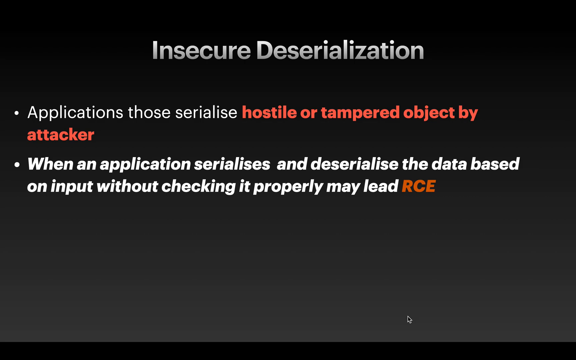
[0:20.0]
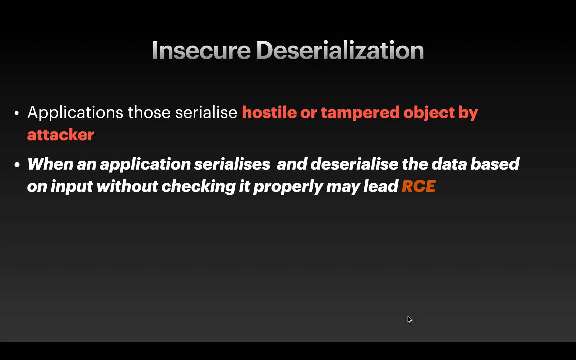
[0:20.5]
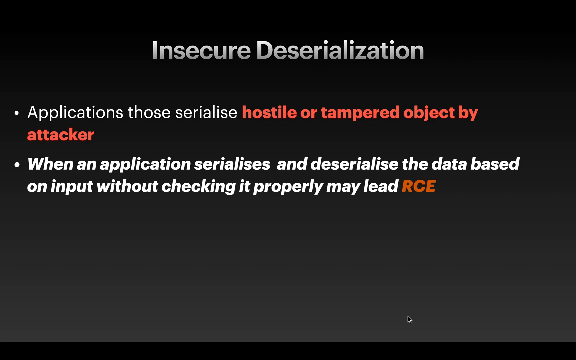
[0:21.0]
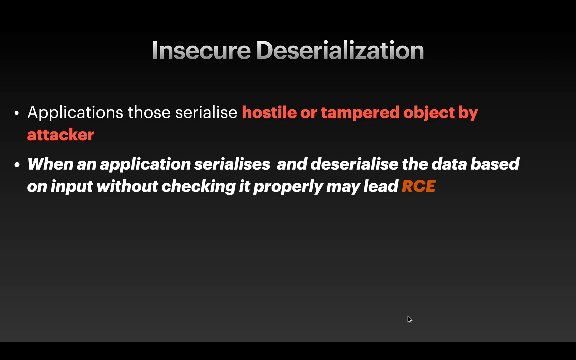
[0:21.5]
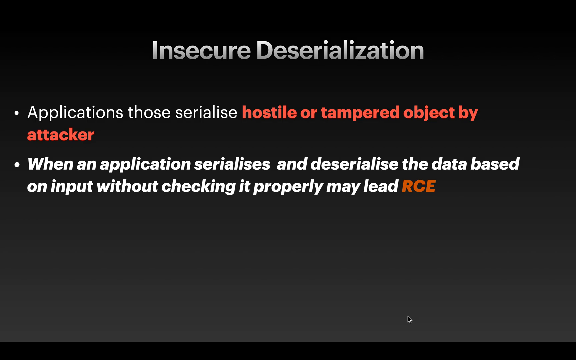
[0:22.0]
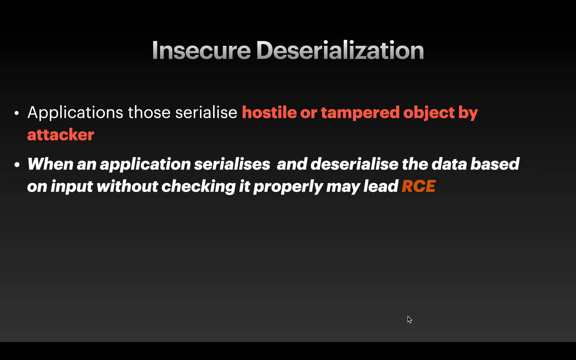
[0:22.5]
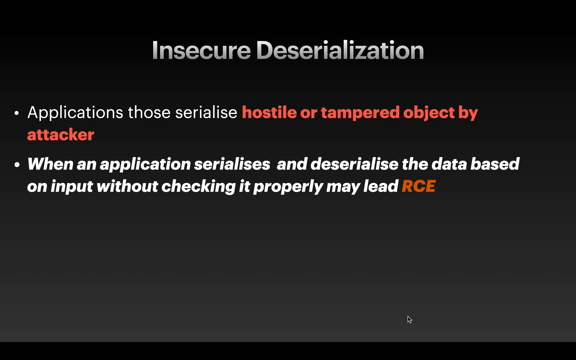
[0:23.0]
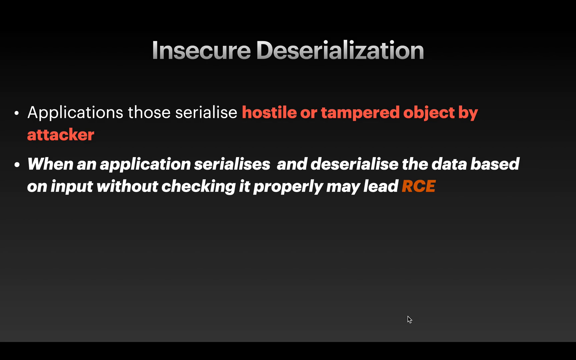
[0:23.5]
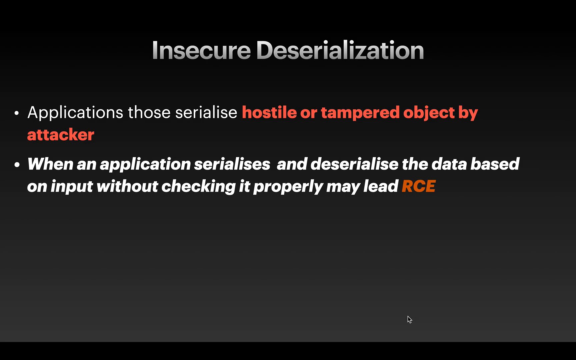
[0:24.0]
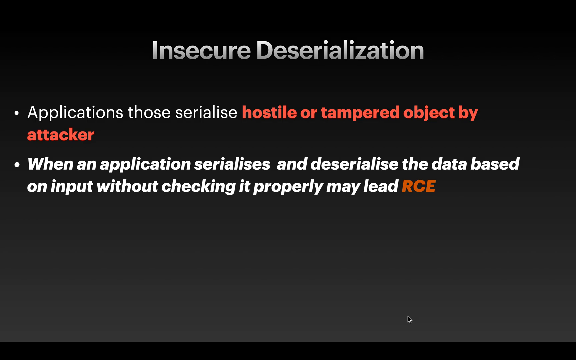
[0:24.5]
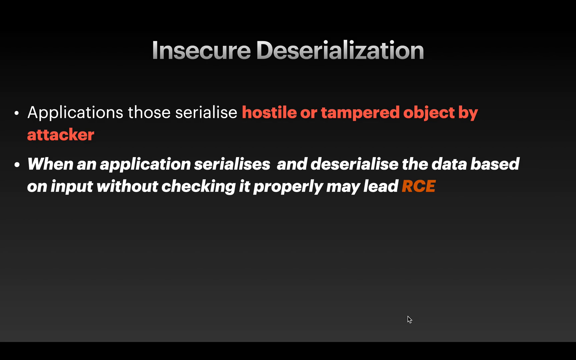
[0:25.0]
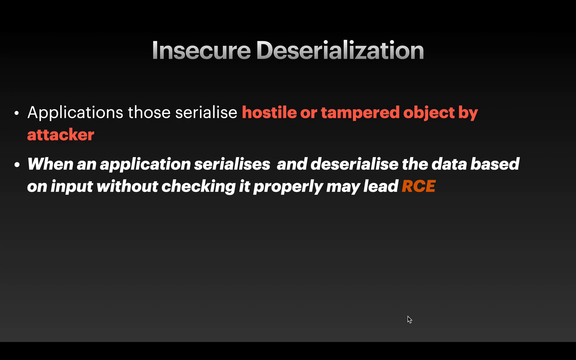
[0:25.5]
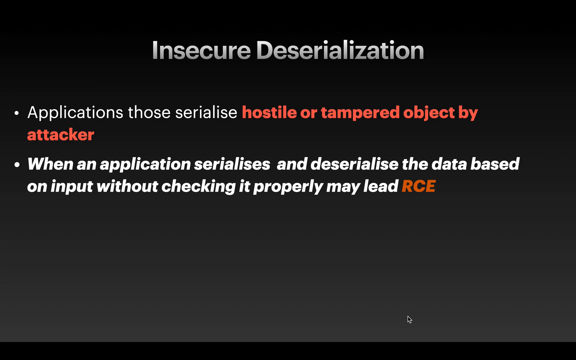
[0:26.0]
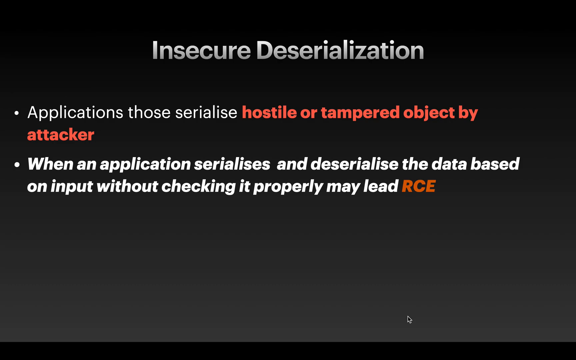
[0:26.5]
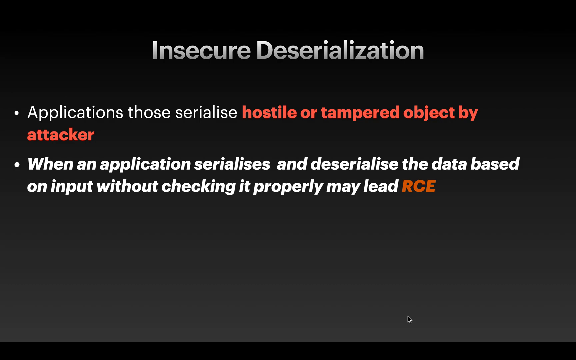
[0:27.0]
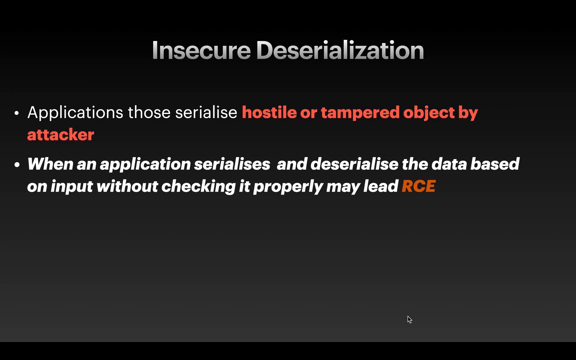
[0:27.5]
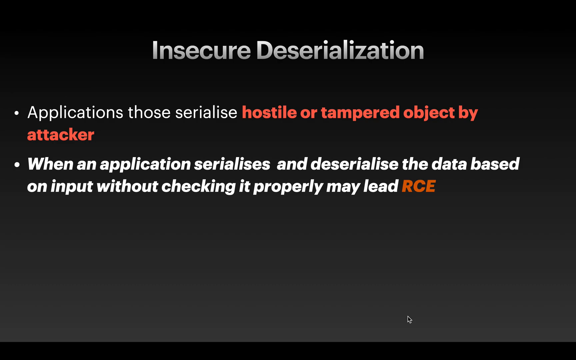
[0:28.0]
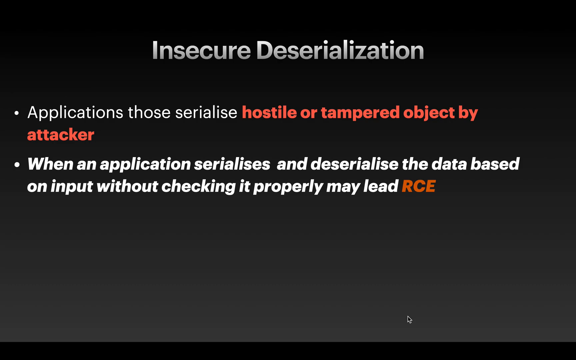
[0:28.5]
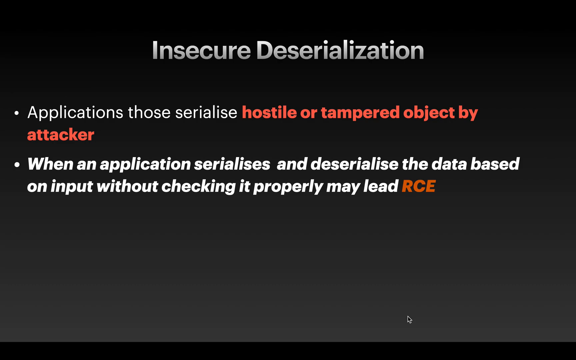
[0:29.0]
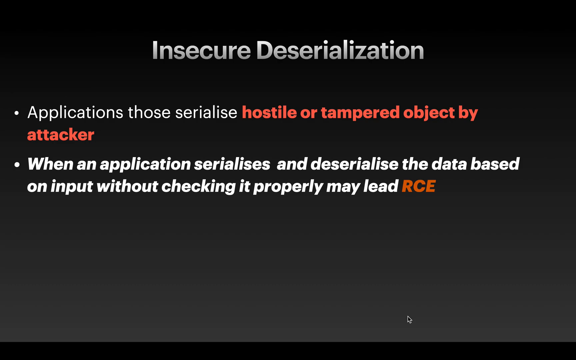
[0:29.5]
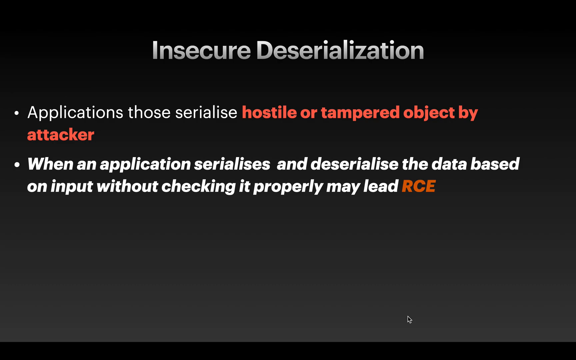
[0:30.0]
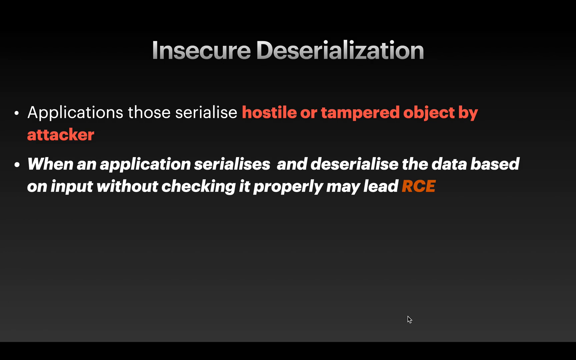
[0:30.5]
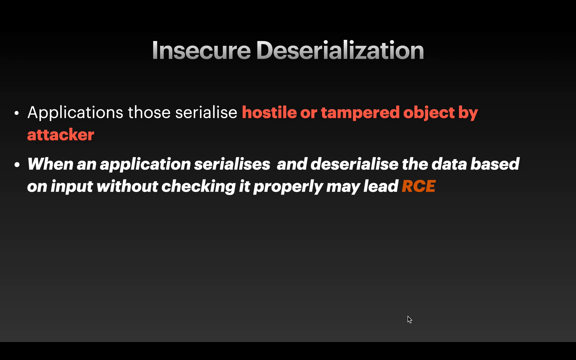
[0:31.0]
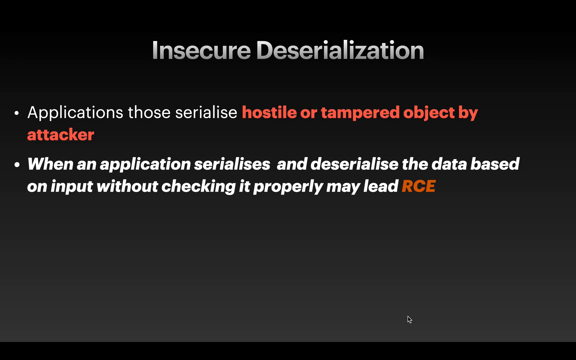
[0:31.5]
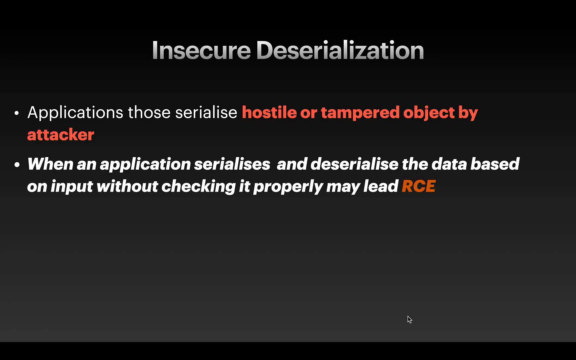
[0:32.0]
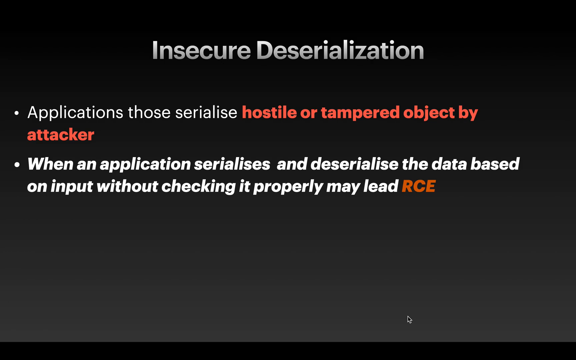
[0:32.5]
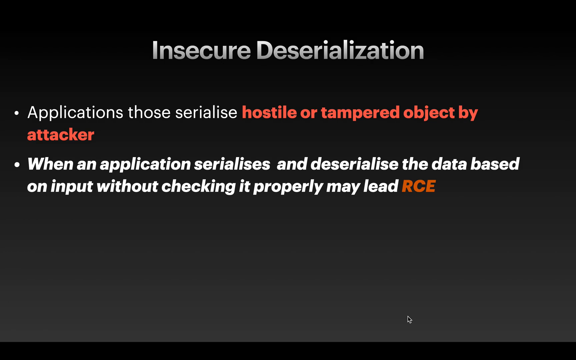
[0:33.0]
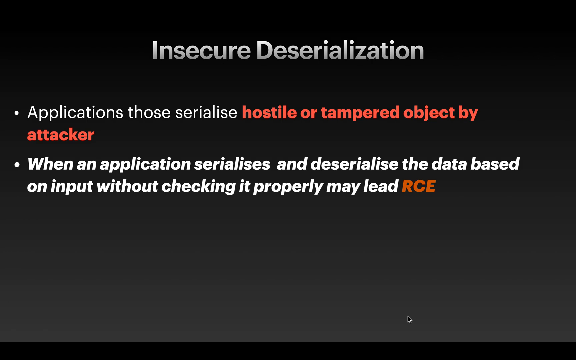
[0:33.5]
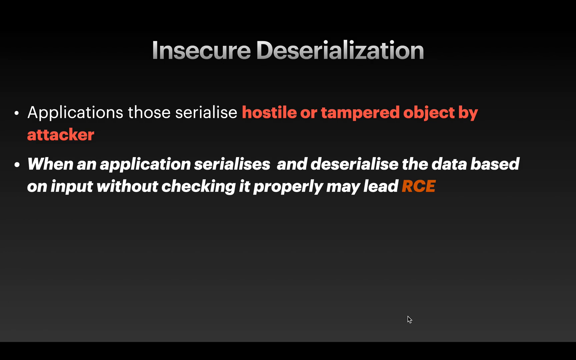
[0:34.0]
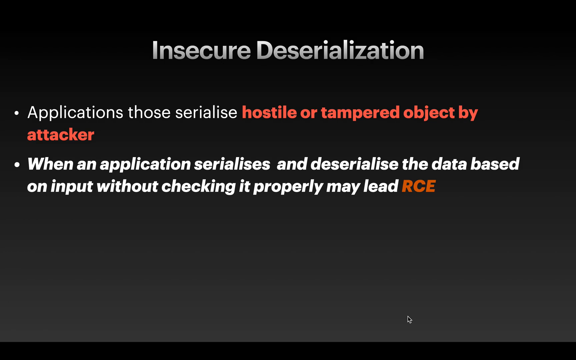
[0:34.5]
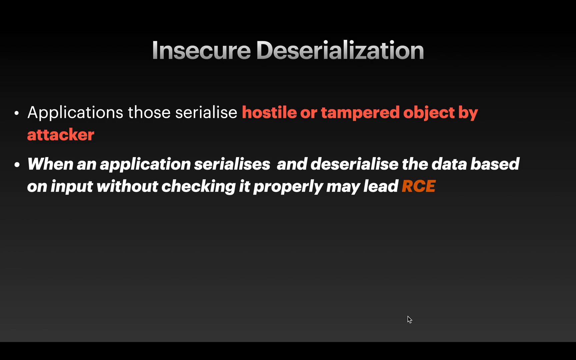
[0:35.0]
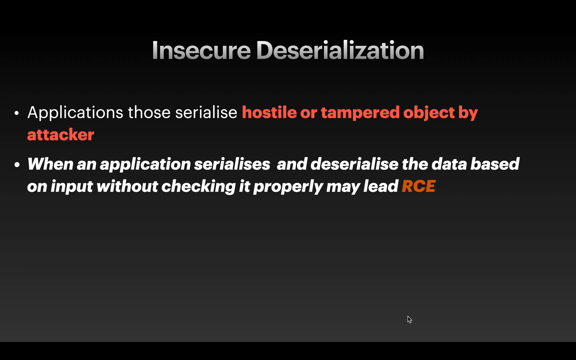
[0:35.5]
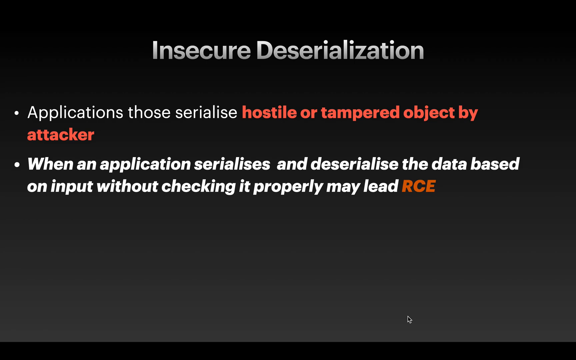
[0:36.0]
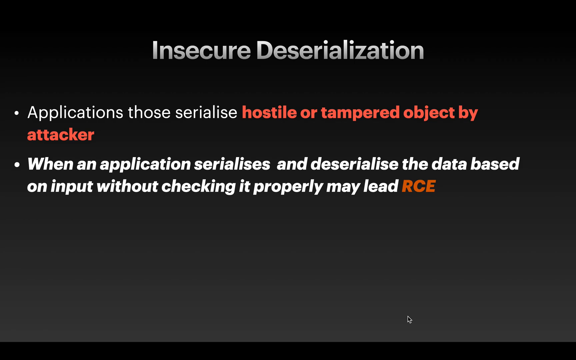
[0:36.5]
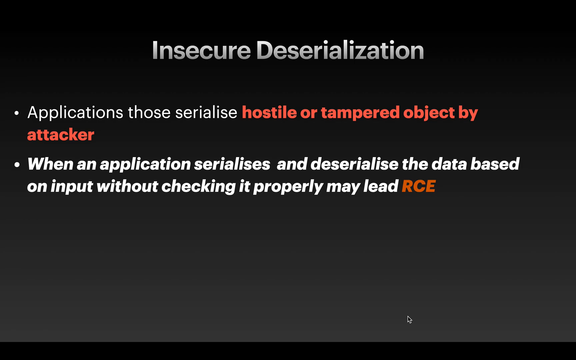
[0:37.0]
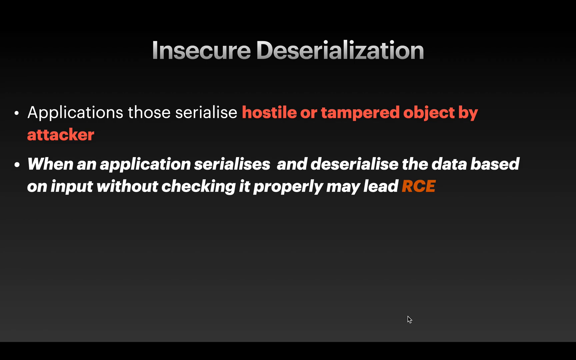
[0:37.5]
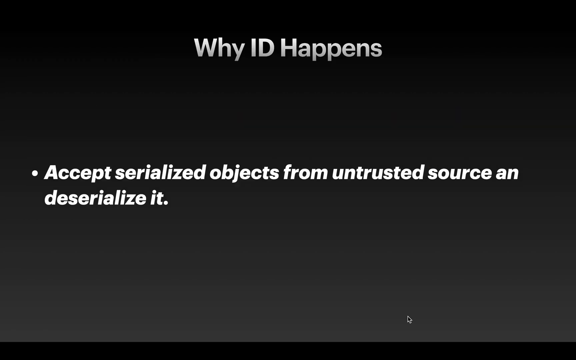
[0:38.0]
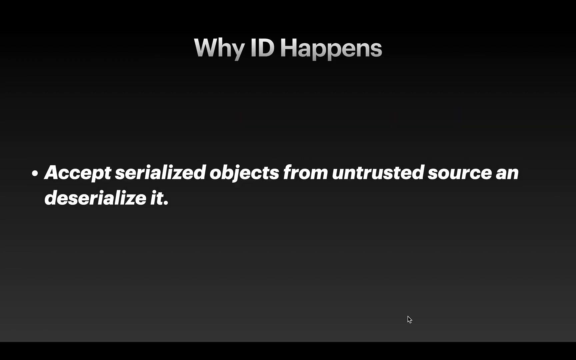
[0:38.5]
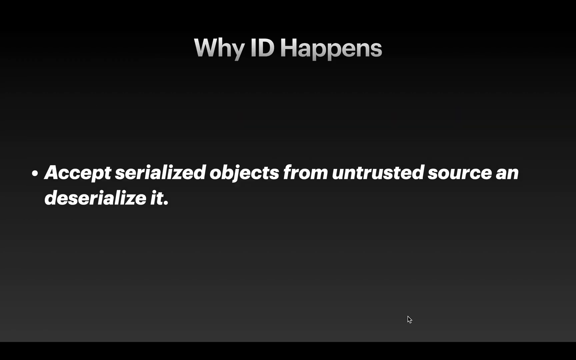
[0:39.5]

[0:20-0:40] The insecure deserialization slide remains on screen. It looks like a presentation on the possible negative effects of bugs and where they come from; the slide says they come from objects that have been tampered with or used by the attacker. It states that when this happens the database is vulnerable, and if it is not checked properly it may lead to RCE, which seems to be a situation to avoid. The screen then changes to another slide that says "why ID happens," all in white letters, stating that it happens because serialized objects from a trusted source are accepted and deserialized.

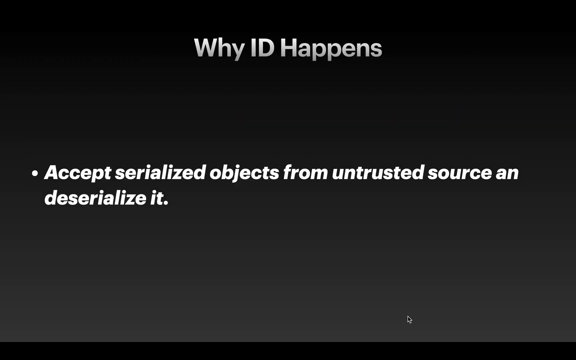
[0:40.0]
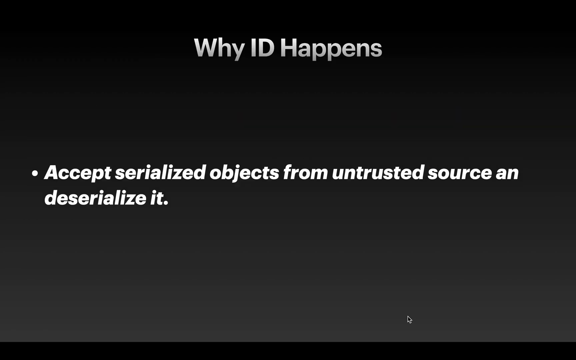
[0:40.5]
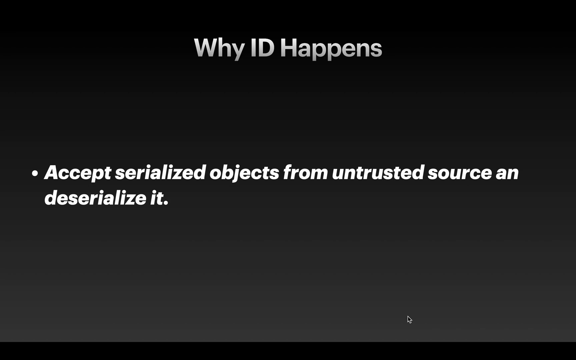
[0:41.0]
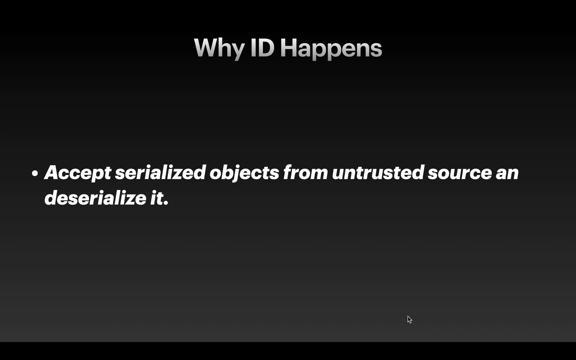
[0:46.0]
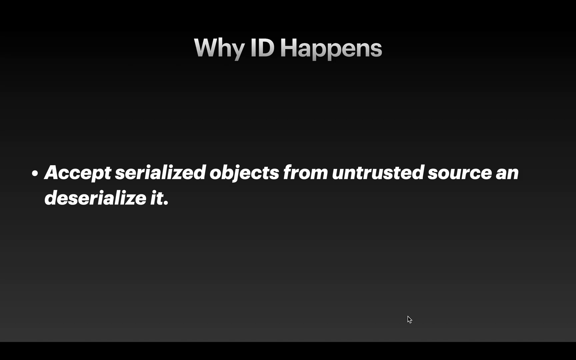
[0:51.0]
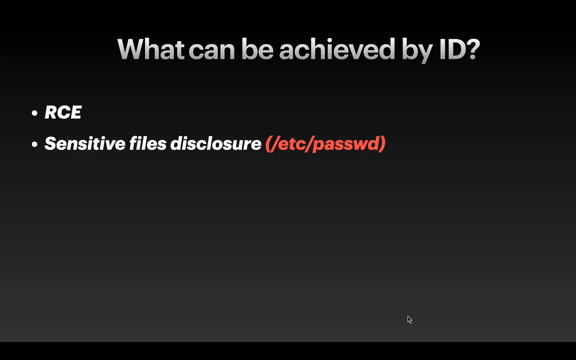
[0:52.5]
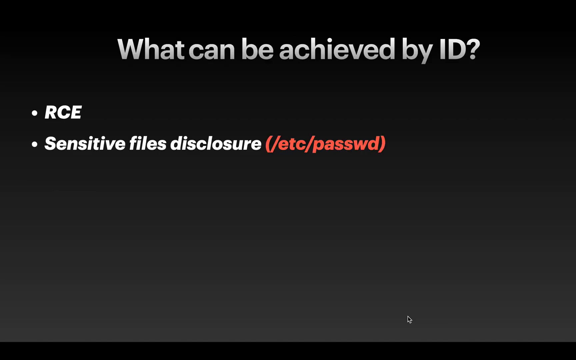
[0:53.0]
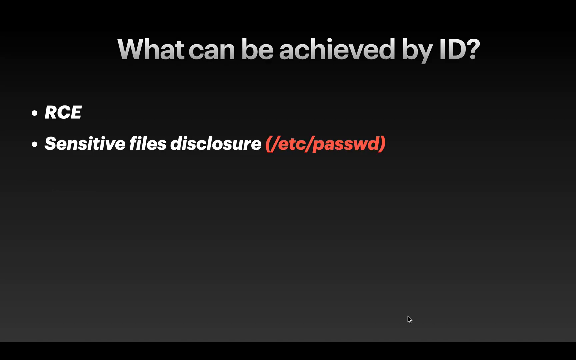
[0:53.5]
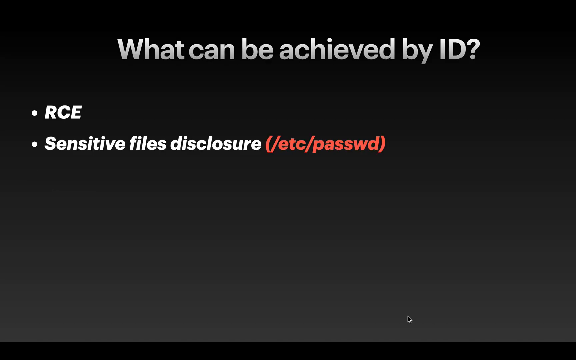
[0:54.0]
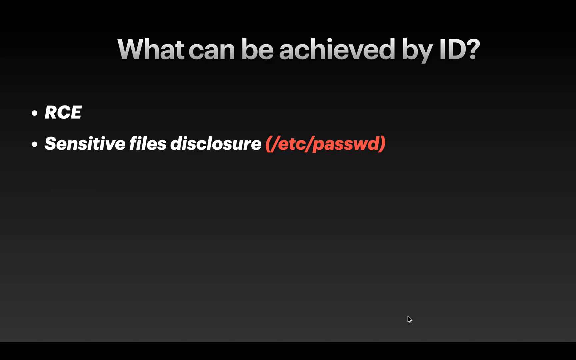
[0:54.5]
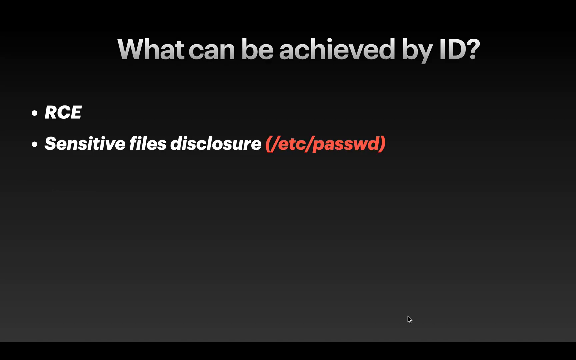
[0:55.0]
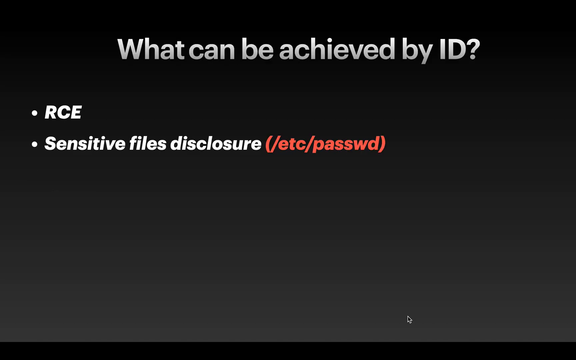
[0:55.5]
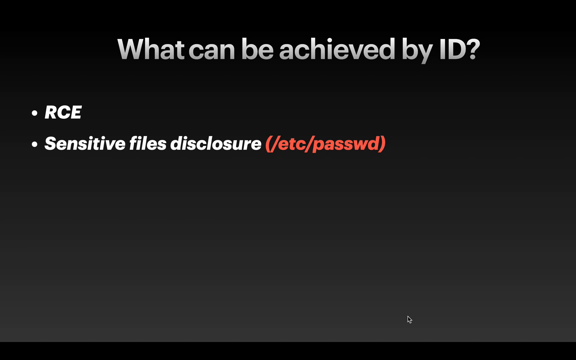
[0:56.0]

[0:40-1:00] A slide that seems to be from a PowerPoint presentation shows the title "Why ID Happens" in grey and white, slightly larger than the other words, which read "Accept Serialized Objects from Untrusted Source and Deserialize it." The slide seems to explain that the problem arises when an object from an untrusted source is used on a computer. The slide then changes to one that says "What can be achieved by ID," with two bullet points: RCE, and sensitive files disclosure, such as passwords.